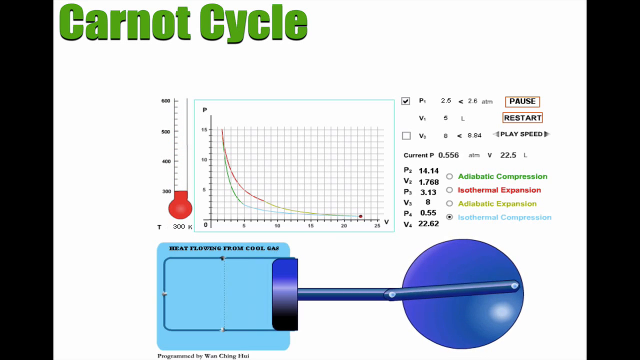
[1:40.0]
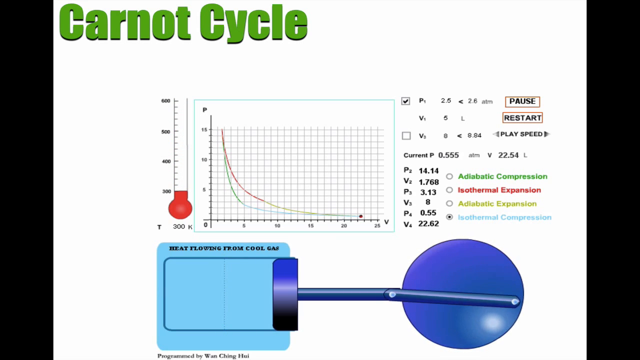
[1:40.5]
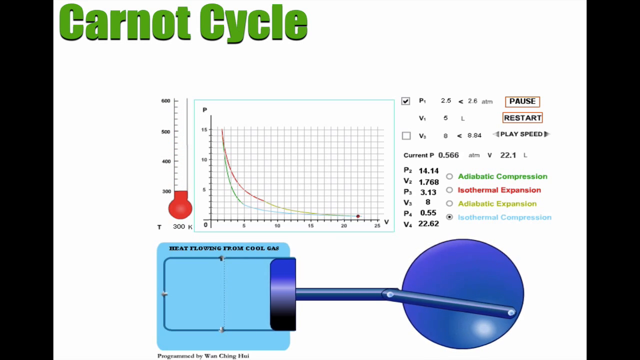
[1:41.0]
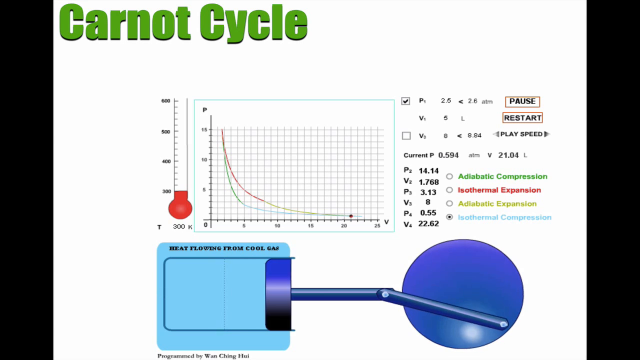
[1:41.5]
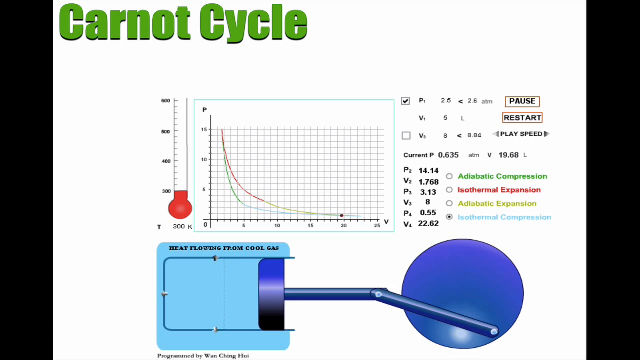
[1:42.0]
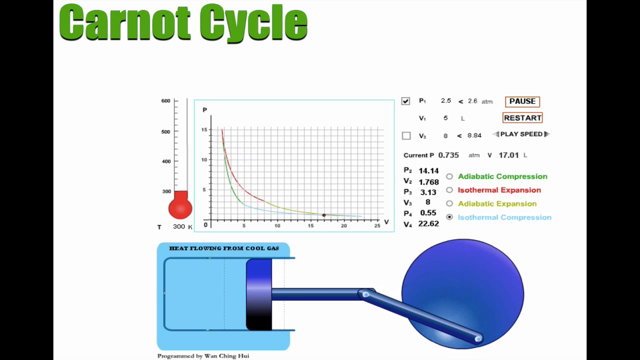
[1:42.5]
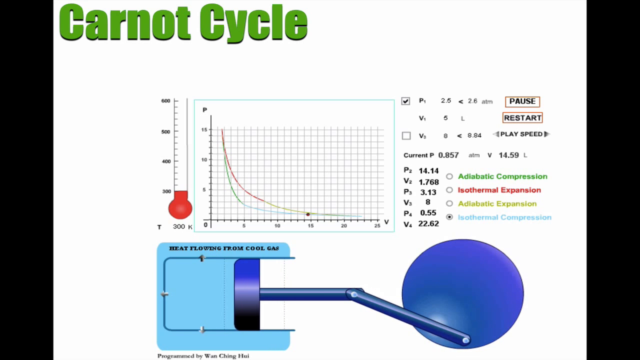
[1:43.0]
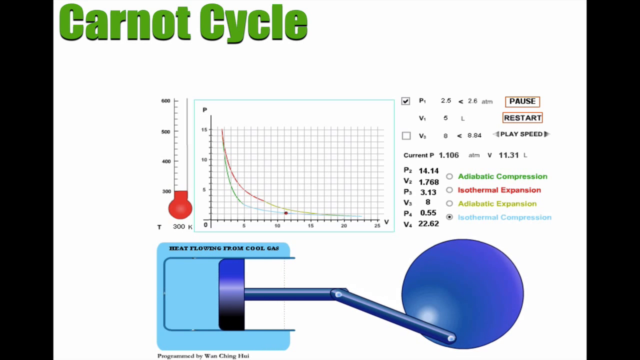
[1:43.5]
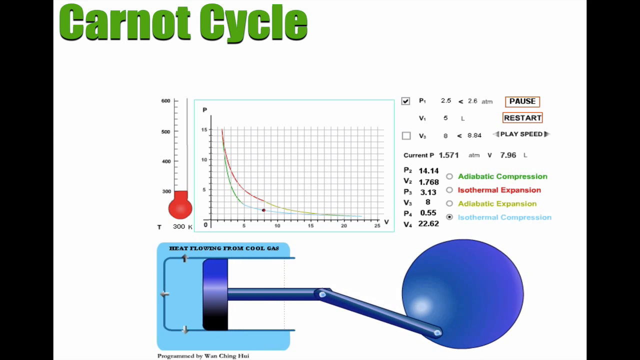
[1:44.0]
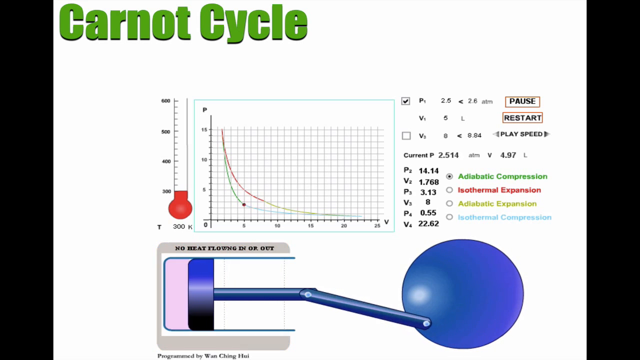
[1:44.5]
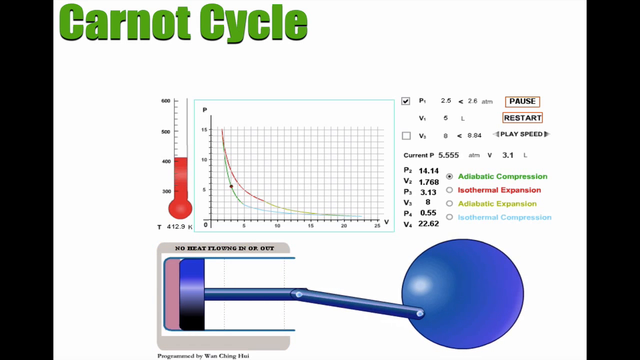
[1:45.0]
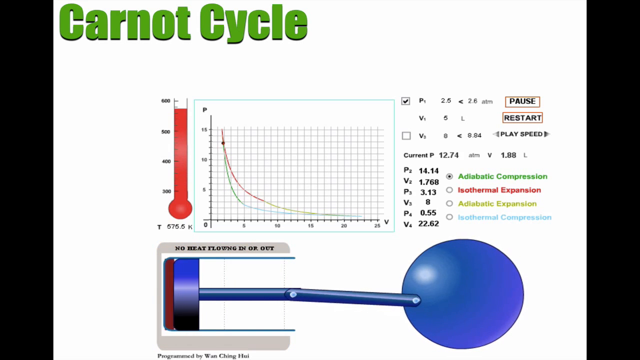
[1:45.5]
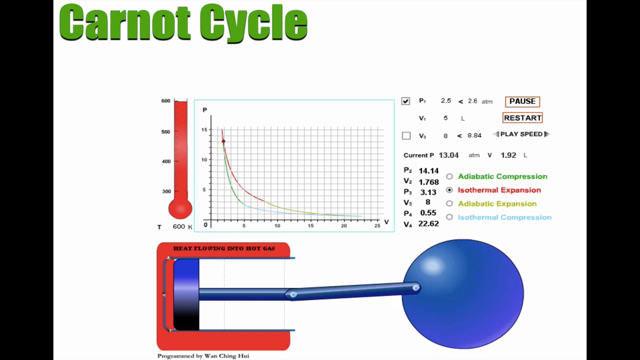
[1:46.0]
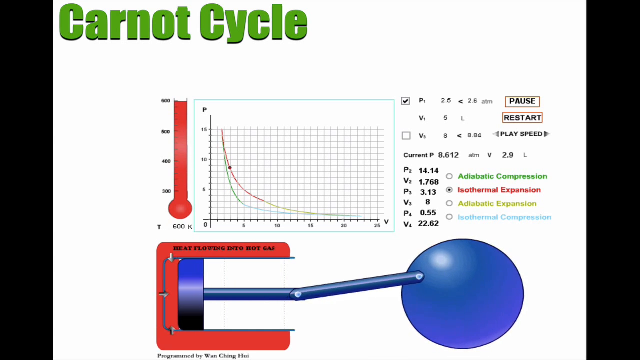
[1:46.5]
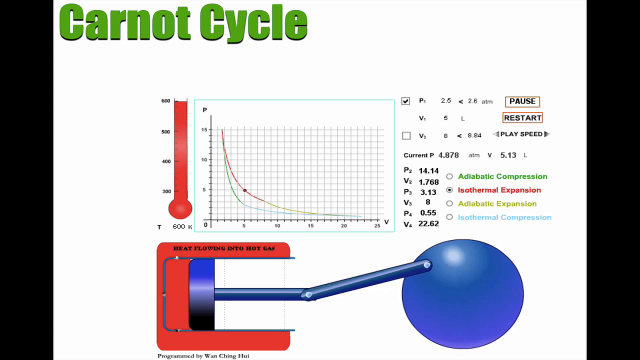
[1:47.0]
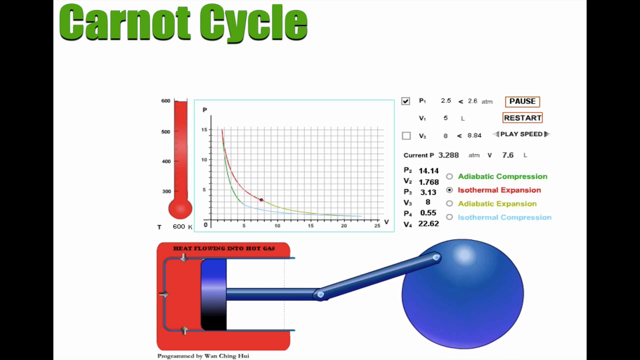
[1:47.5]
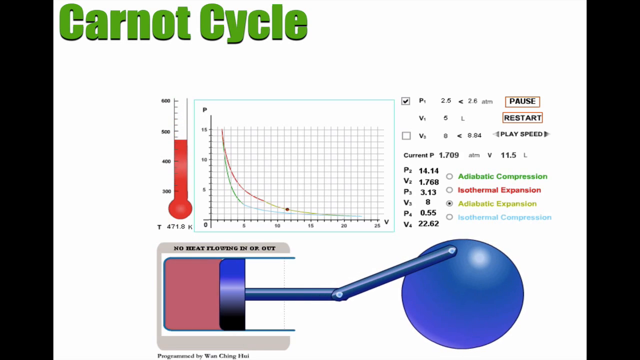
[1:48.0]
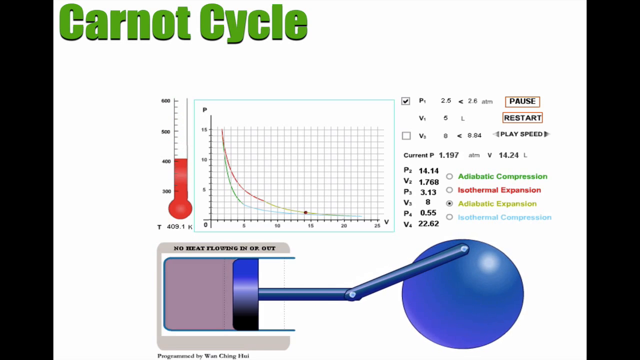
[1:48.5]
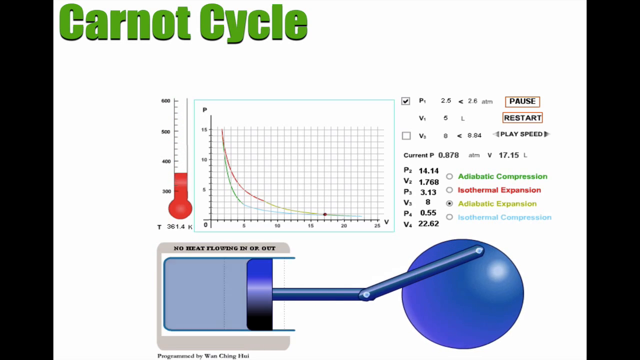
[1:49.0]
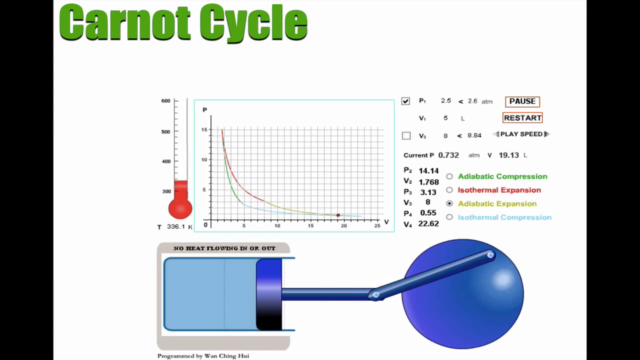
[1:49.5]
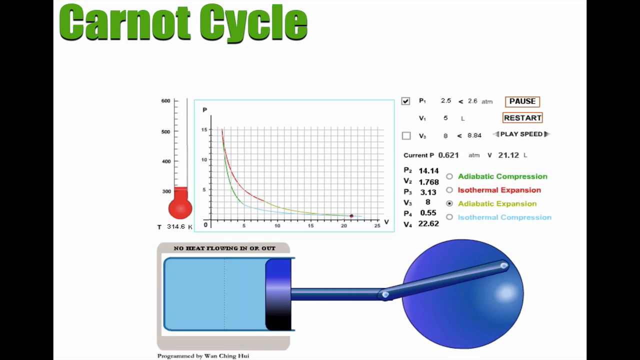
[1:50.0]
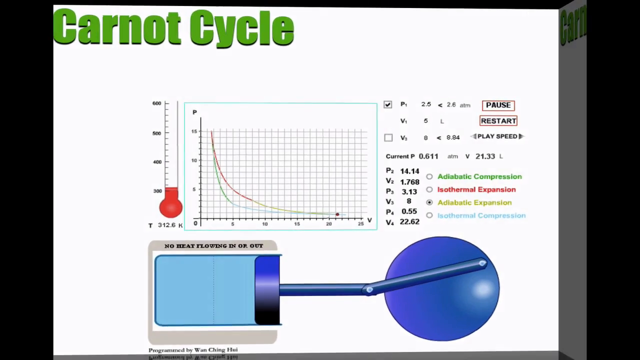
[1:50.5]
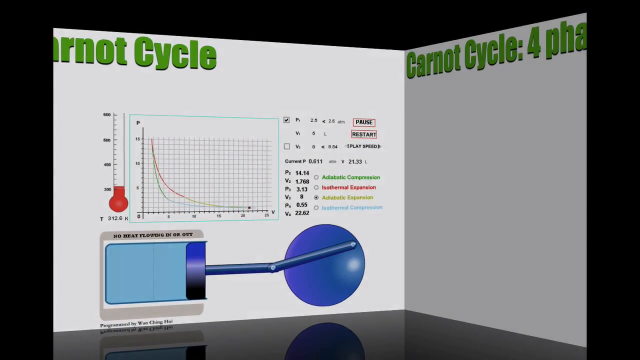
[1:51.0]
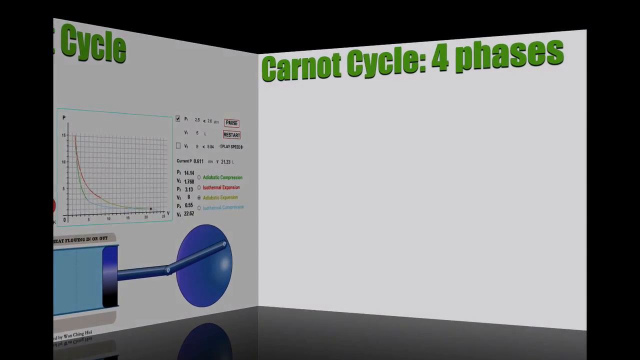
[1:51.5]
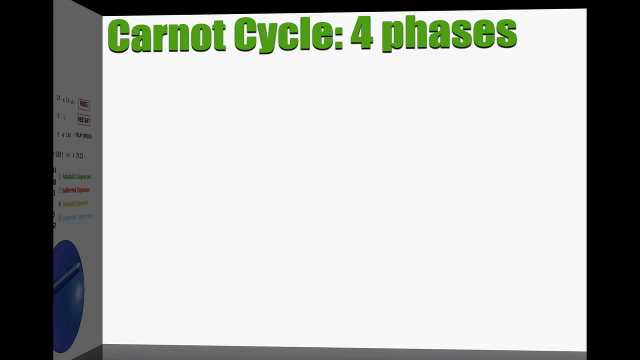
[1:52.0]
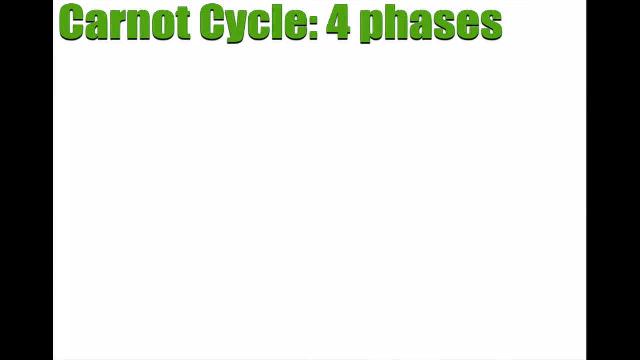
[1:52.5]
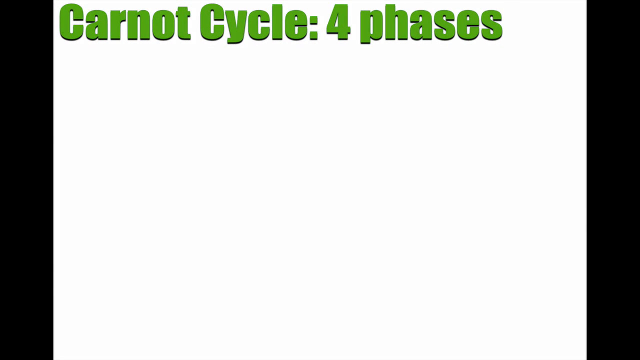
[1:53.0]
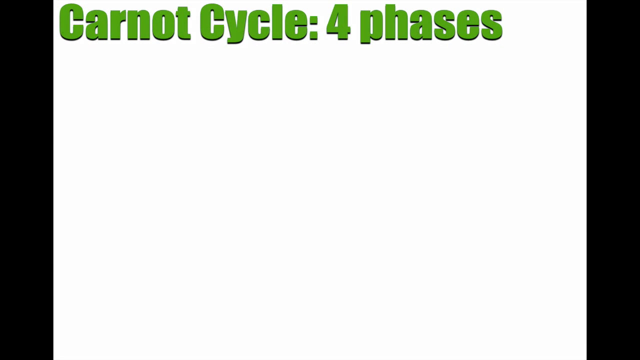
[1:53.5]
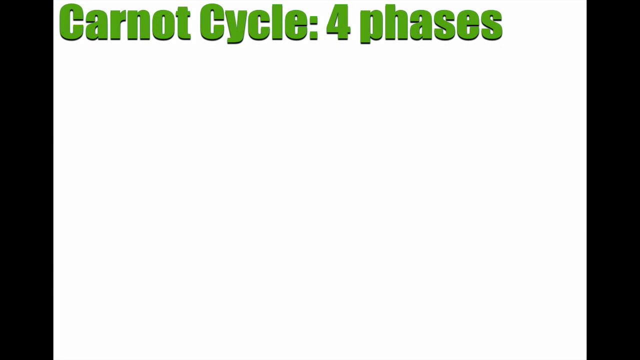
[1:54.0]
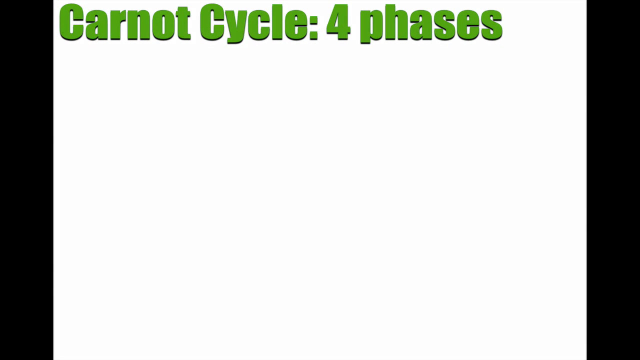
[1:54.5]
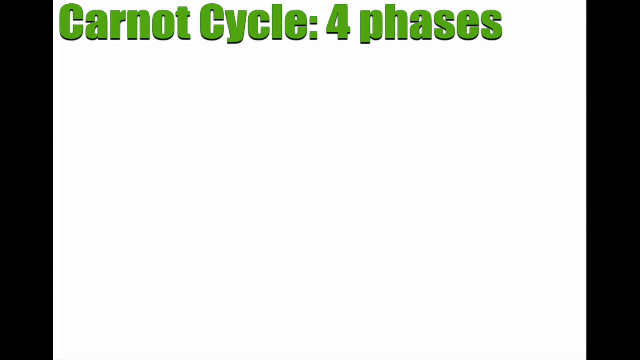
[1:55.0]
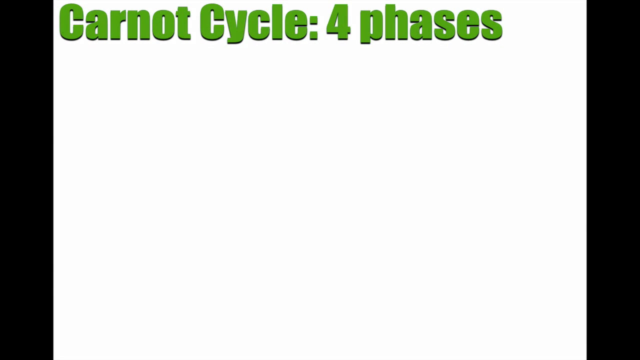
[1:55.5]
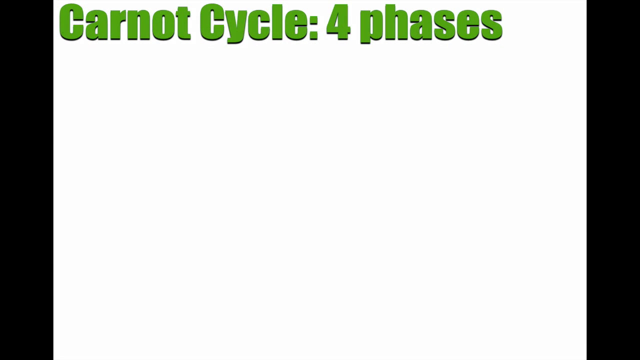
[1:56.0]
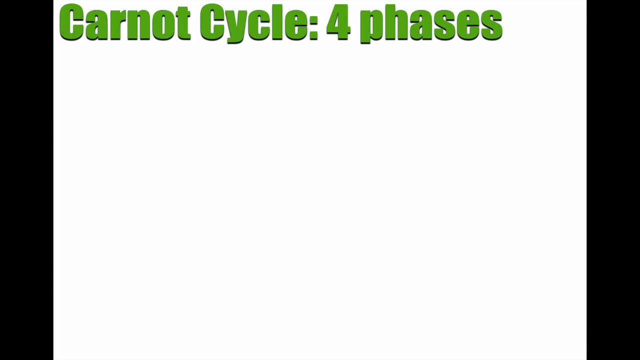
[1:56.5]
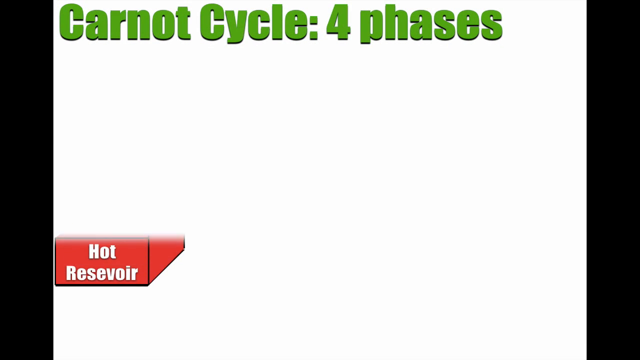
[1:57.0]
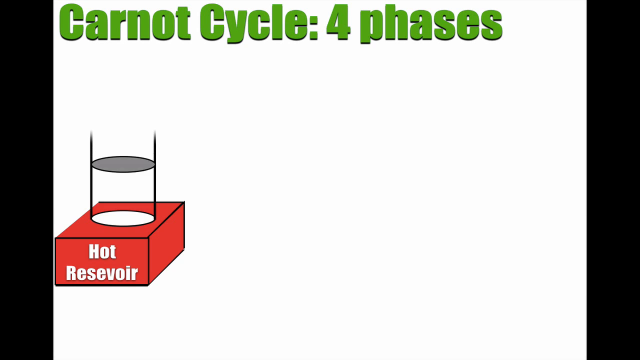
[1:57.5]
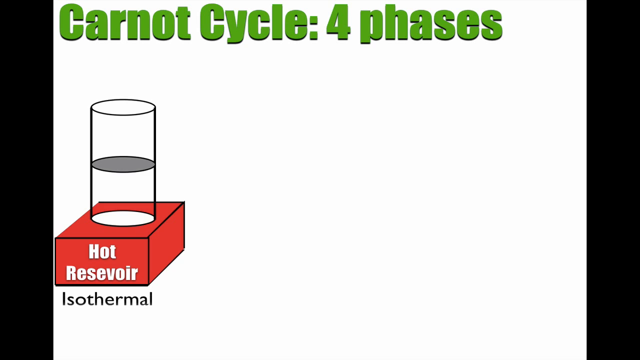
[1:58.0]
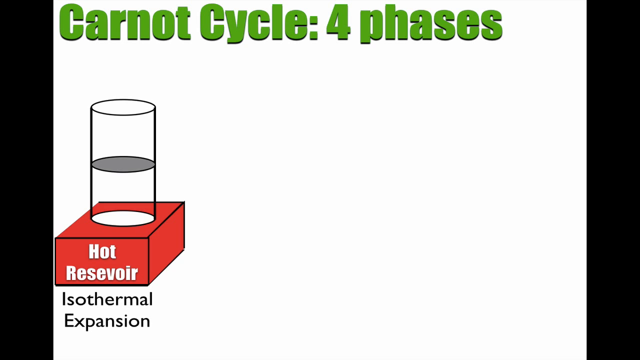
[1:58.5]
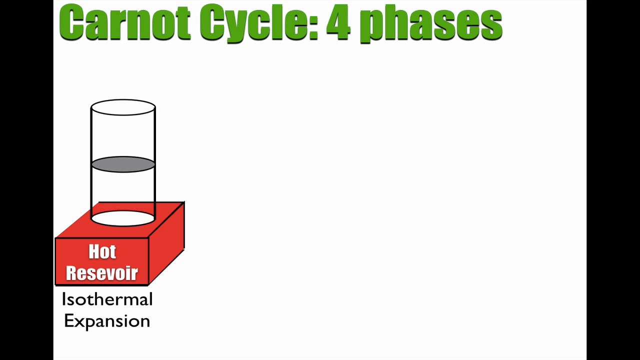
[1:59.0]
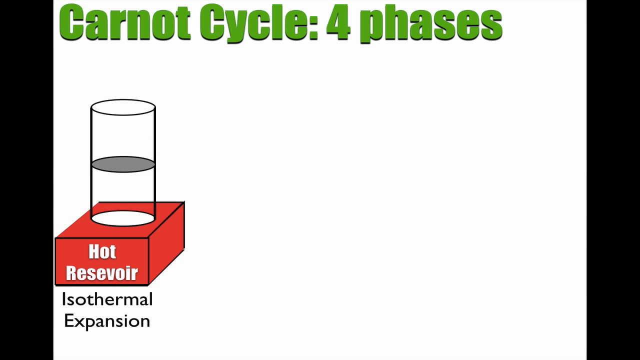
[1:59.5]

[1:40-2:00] The cycle continues: the black borders remain left and right, the white sheet still has "Carnot cycle" in the top left, and the thermometer, the graph, the symbols and the heat-flow demonstration in the bottom diagram are still there. Then the screen seems to turn onto its side and leave on the left, like a book with two pages open where the left page is replaced by the right, and a new screen reads "Carnot cycle: four phases" in luminous lime green, with the black borders still on both sides. On the left-hand side is a graphic that looks like a red container with a glass tube or glass tower sticking out of it. Halfway up the tube is gray coloring, an eye shape, and then more gray coloring. There is a circle at the top, the exit, and one at the bottom of the tube, indicating the entrance to the container, which has "hot reservoir" in white text on its red front. Below it is the text "isothermal expansion".